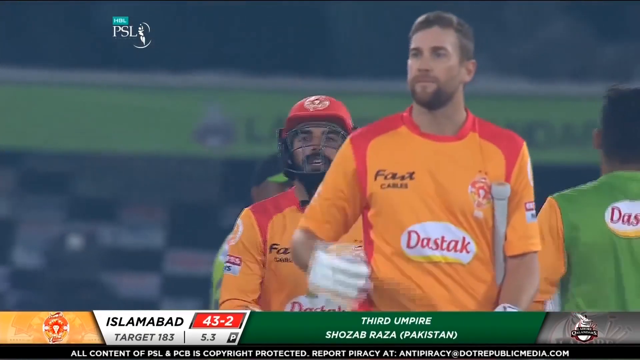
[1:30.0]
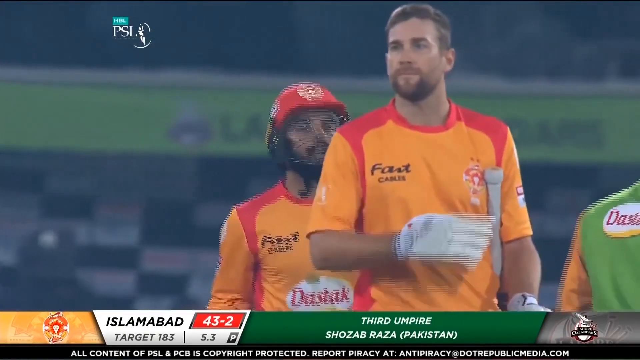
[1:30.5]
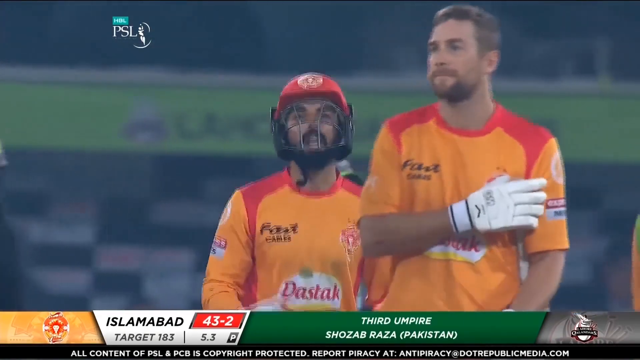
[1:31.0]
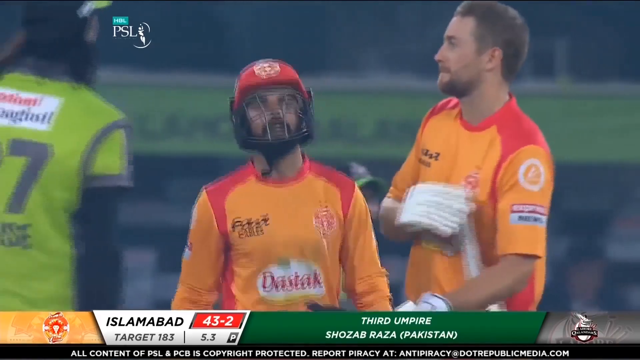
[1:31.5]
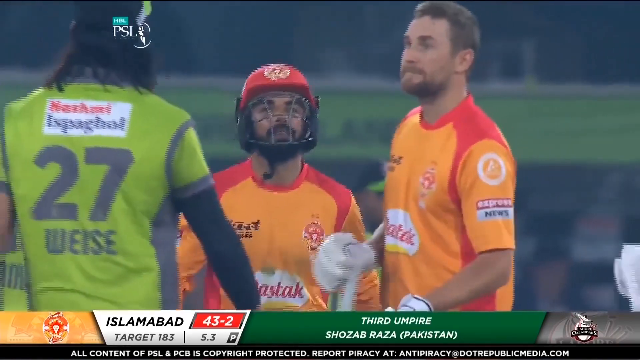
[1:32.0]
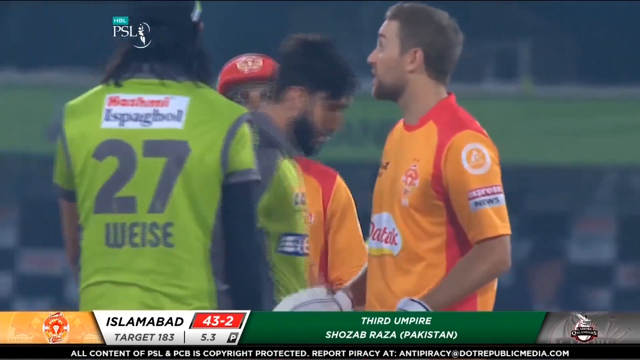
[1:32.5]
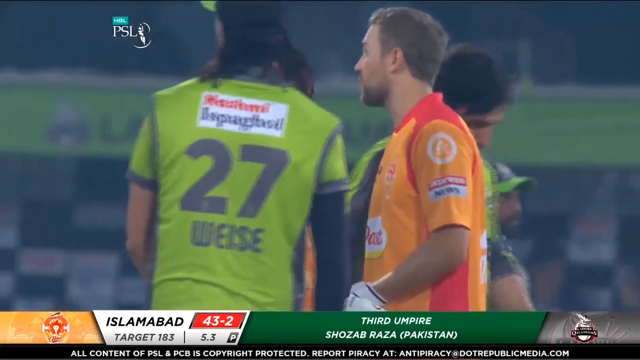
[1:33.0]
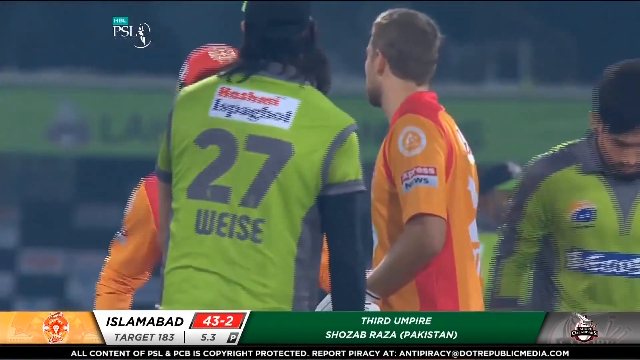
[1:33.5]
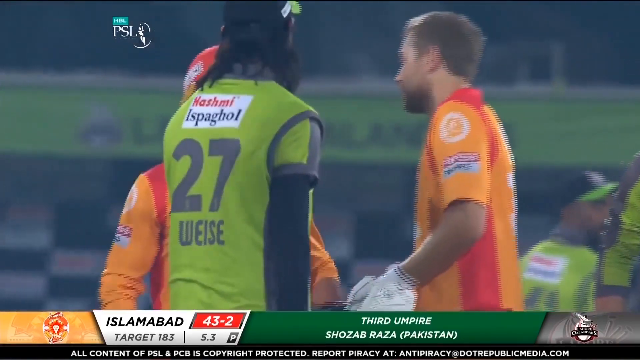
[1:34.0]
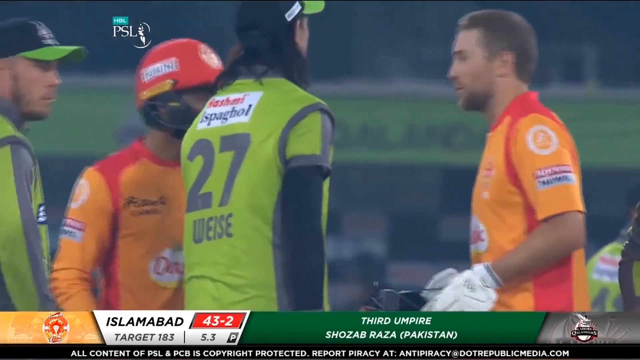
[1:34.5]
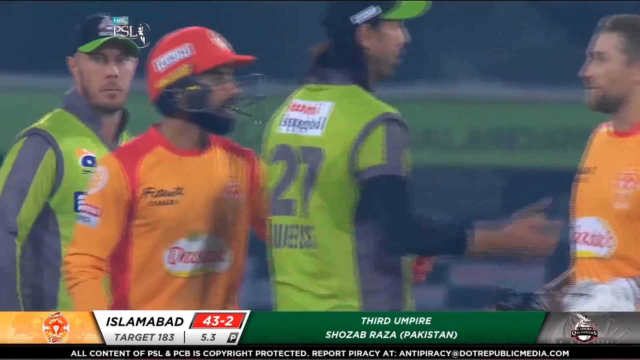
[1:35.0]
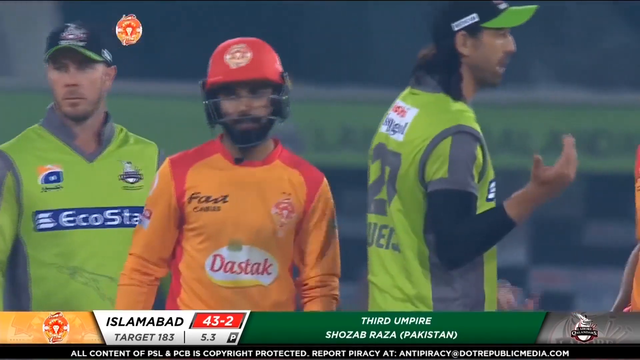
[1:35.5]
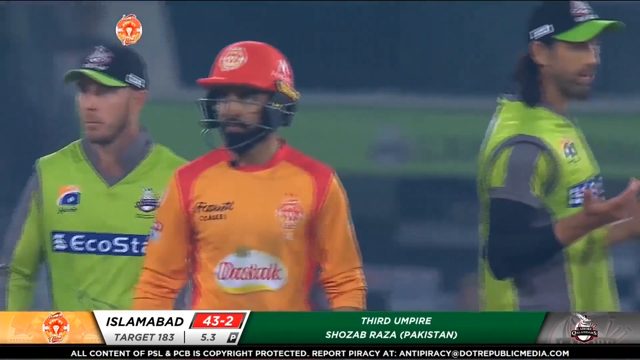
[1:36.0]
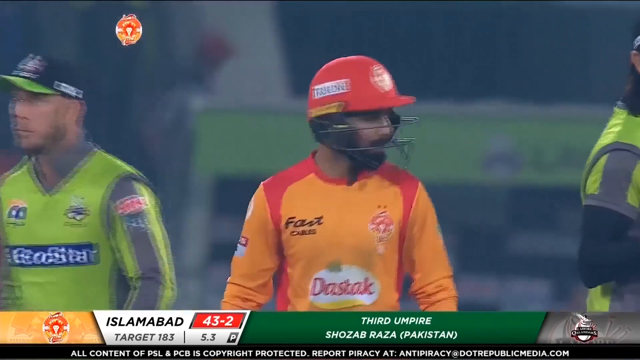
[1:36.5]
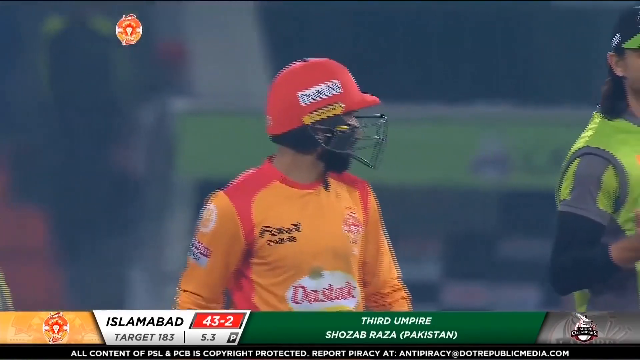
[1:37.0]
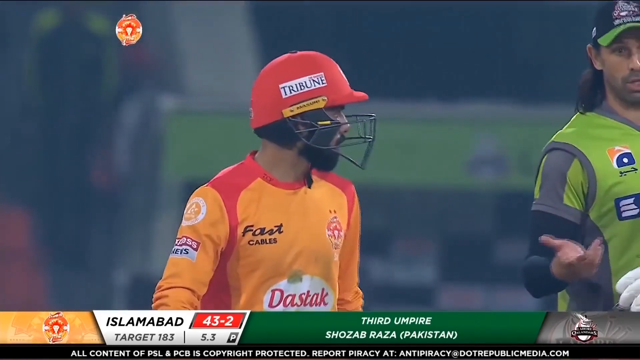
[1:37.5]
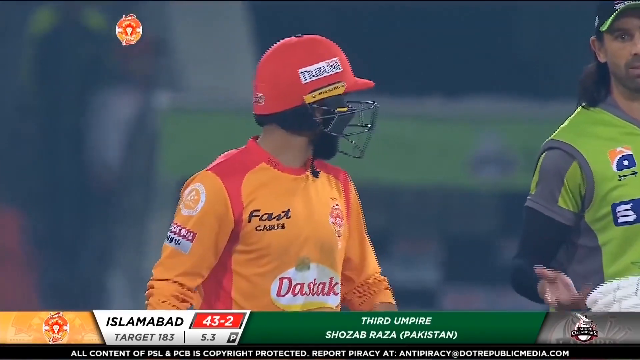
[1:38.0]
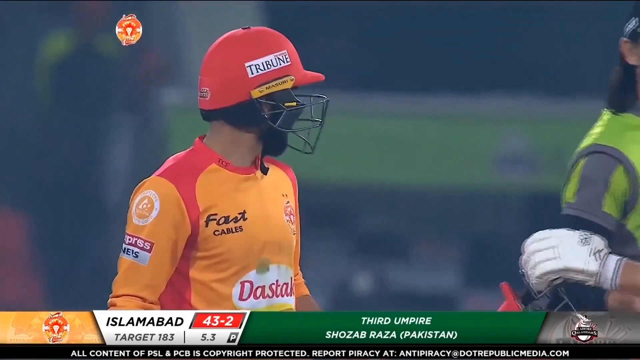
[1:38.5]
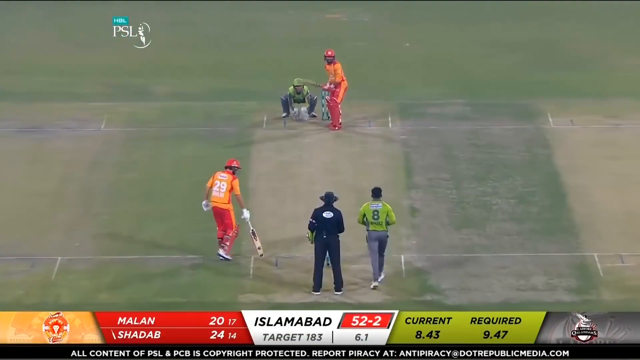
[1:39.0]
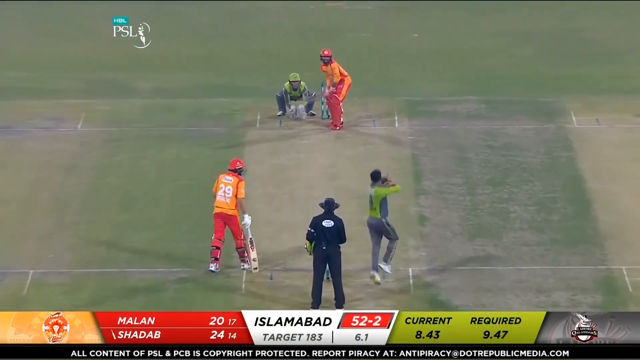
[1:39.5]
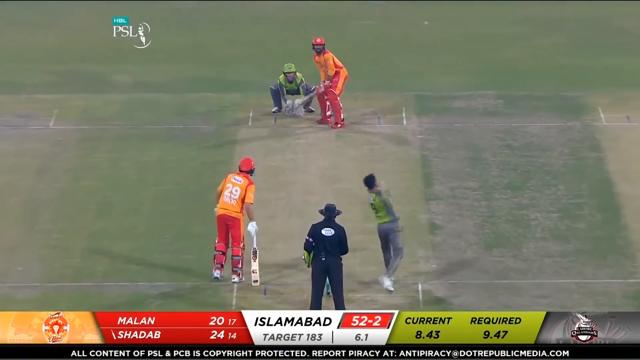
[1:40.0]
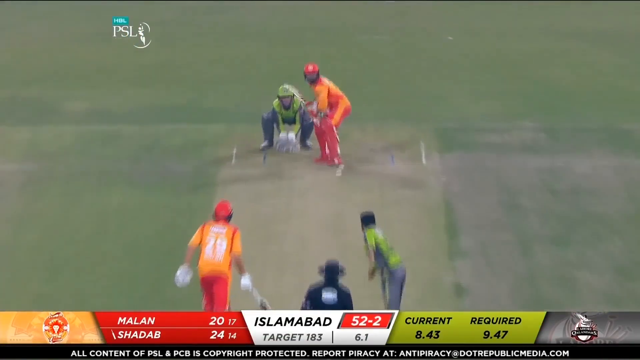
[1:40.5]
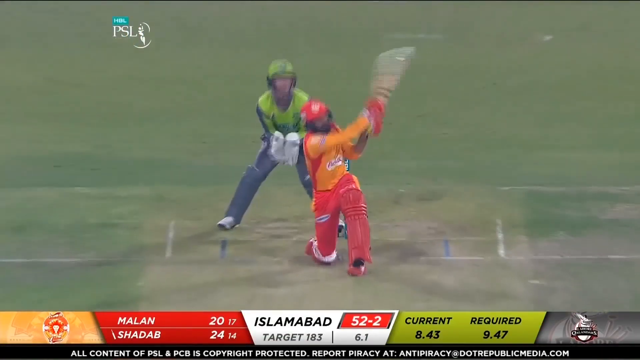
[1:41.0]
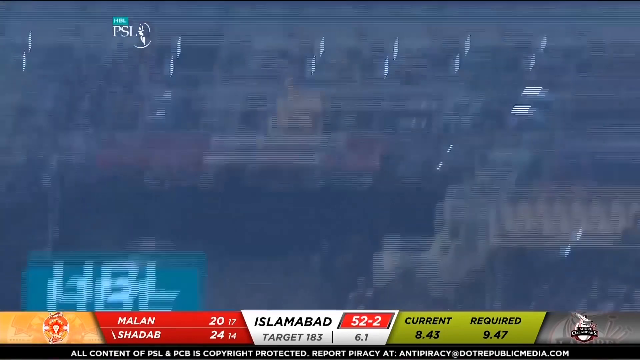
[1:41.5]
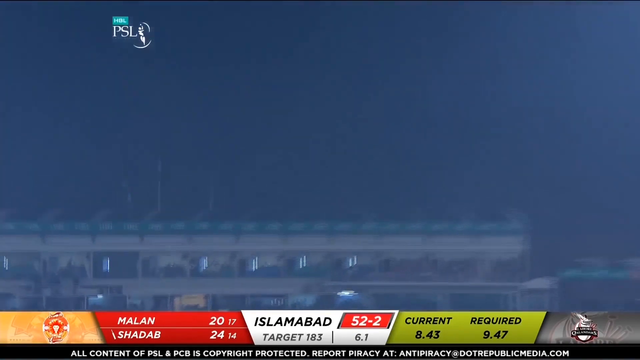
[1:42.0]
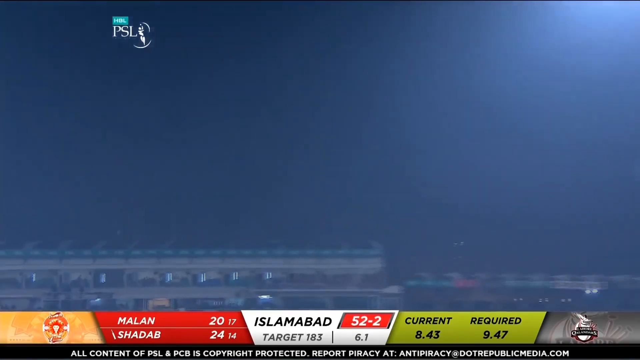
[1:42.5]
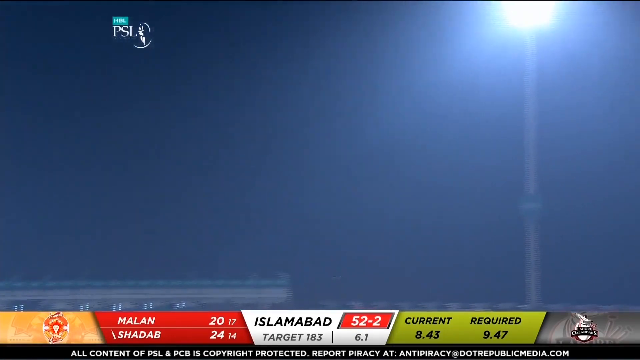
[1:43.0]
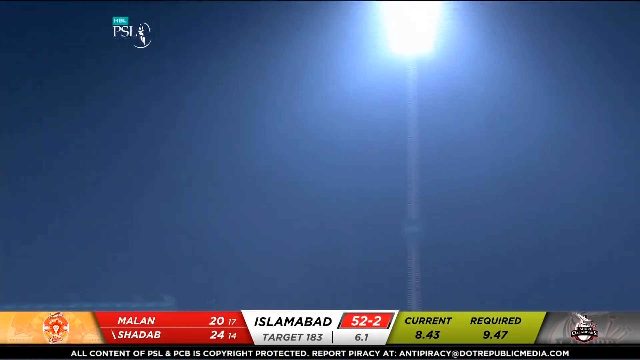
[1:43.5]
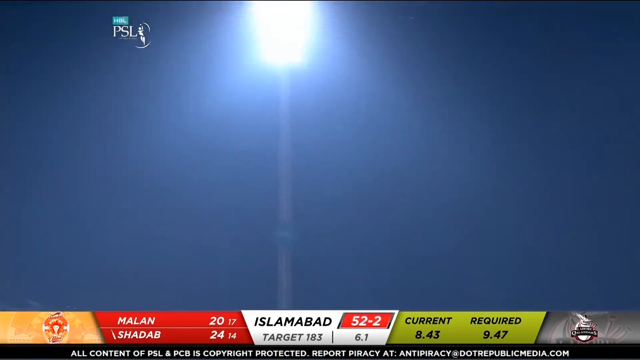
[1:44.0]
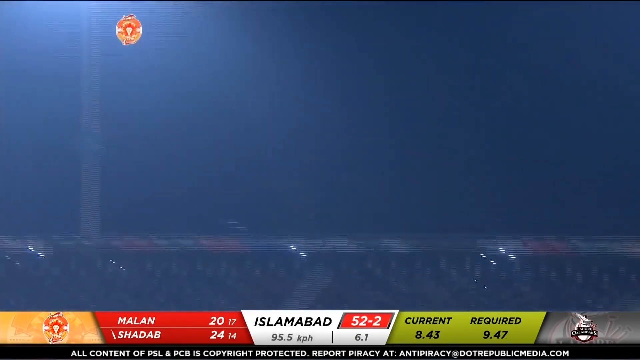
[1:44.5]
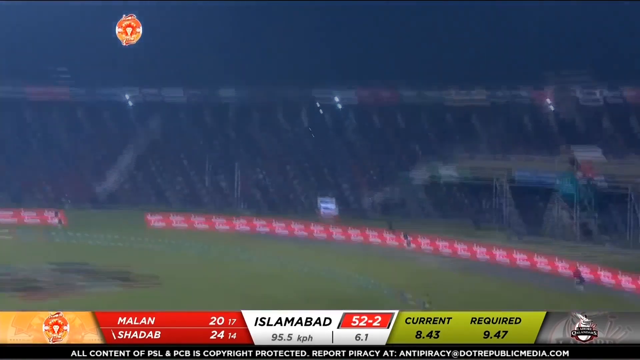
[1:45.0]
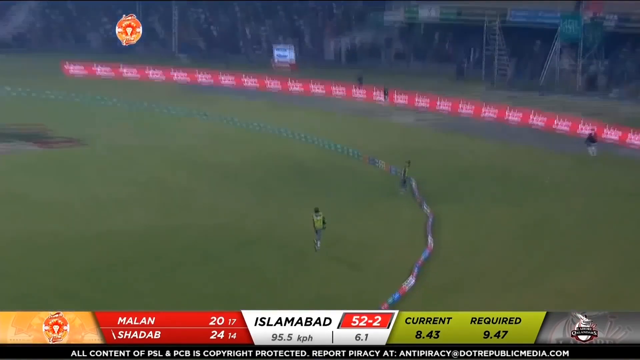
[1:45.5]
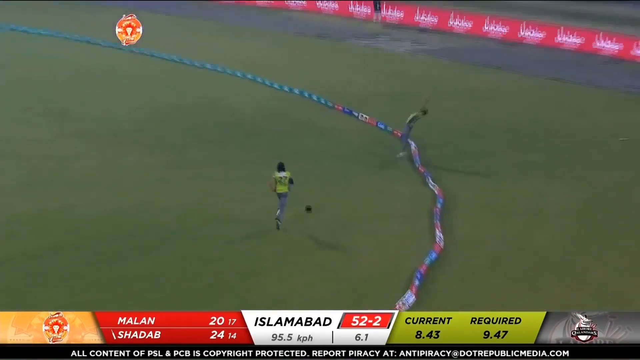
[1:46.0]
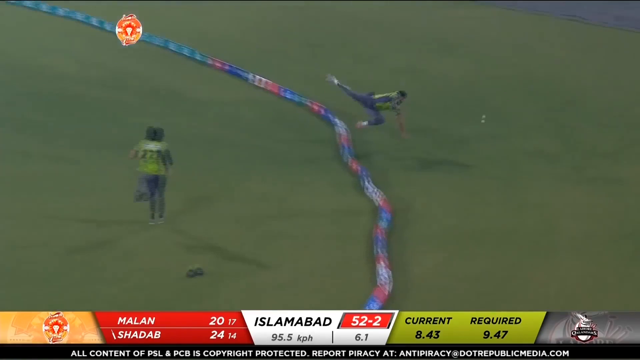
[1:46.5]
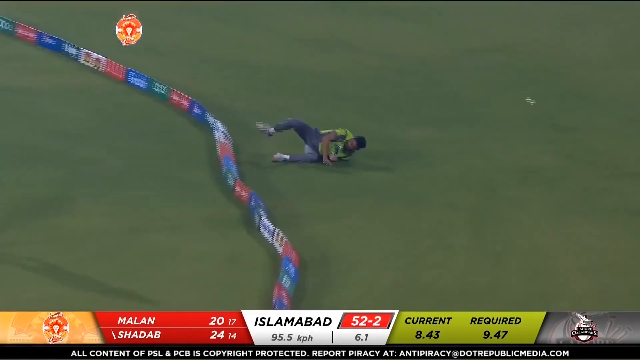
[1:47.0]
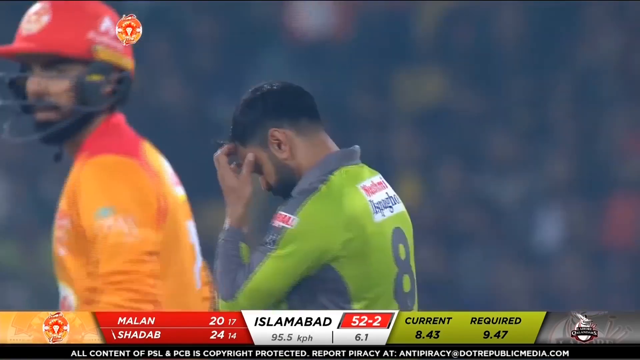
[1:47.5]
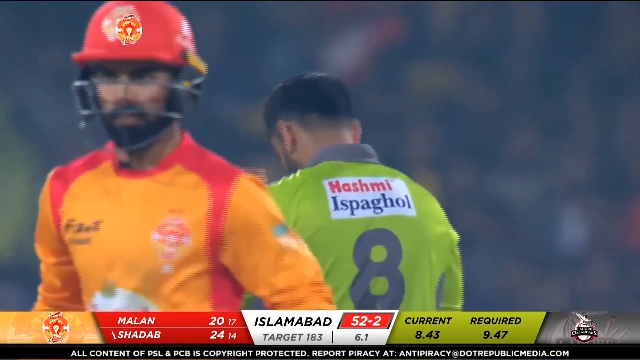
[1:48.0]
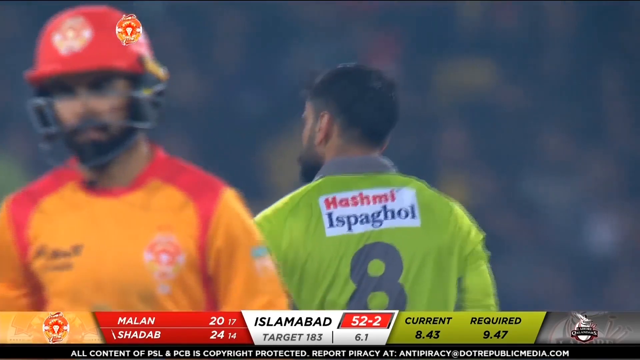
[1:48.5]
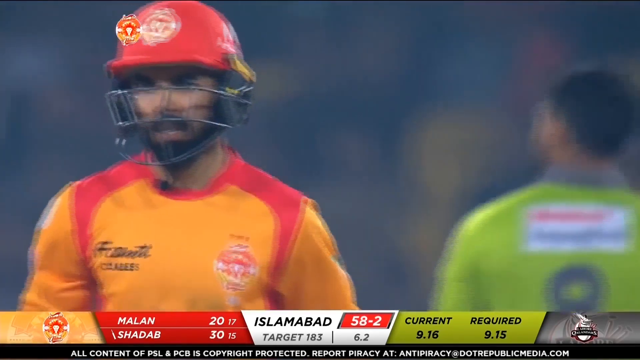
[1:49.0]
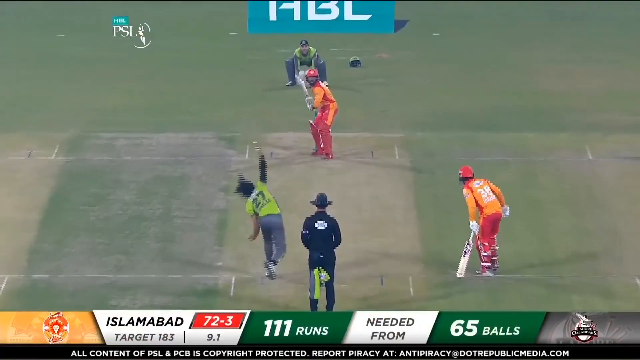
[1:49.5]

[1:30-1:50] With Islamabad on 43 for 2, the two batsmen have a conversation. The player of European origin, presumably Malan, has taken his helmet off and keeps talking to his teammate. Back in the action, Islamabad are on 52 for two. A slow bowler comes in from the right-hand side of the wicket and pitches the ball where the batsman wants it; the batsman goes for a massive hit to his left, and the ball travels a very long way, beyond the fielder's reach and over the boundary rope for six runs. An opposition player is shown; the opposition are sponsored by EcoStar, and one of them, named Weise, has a big mullet haircut.